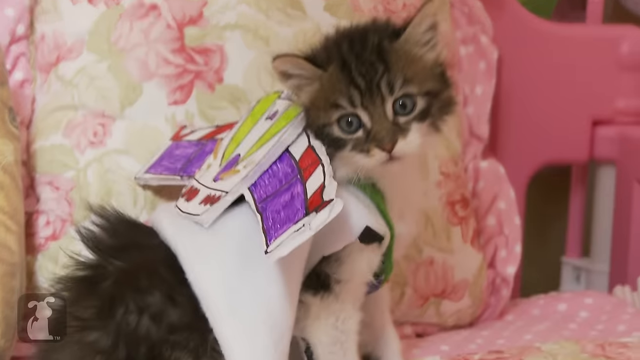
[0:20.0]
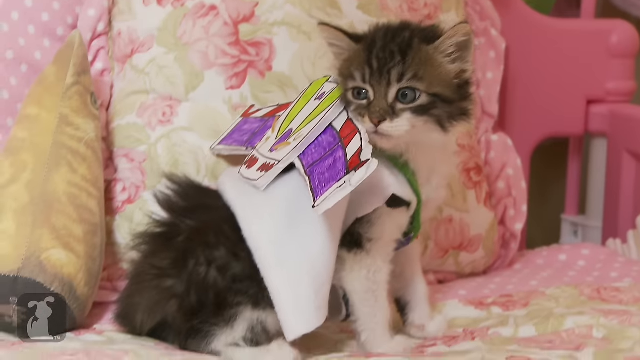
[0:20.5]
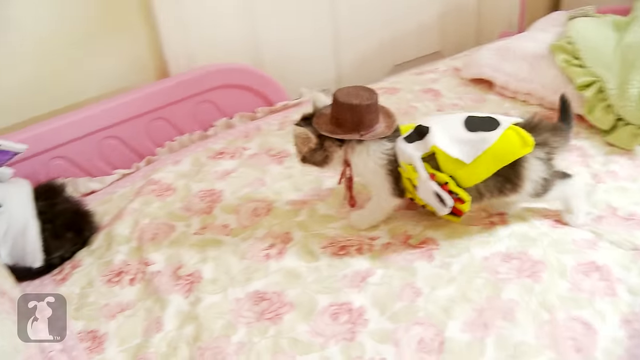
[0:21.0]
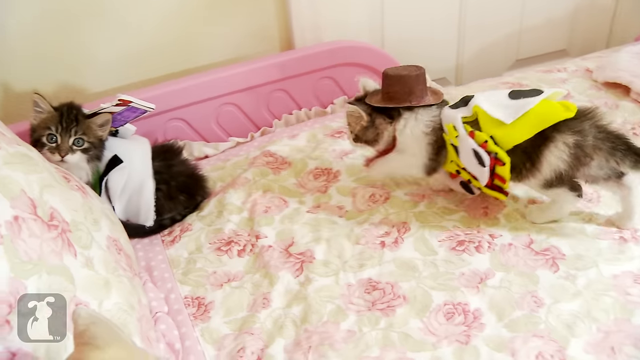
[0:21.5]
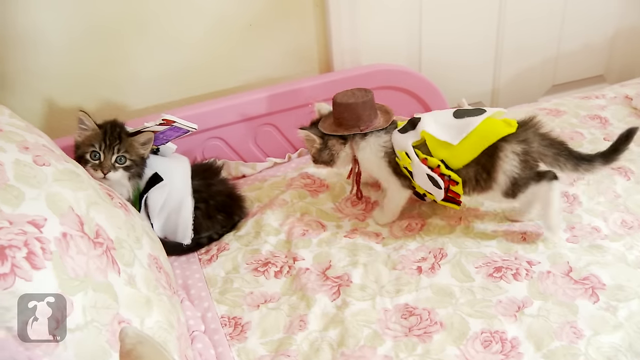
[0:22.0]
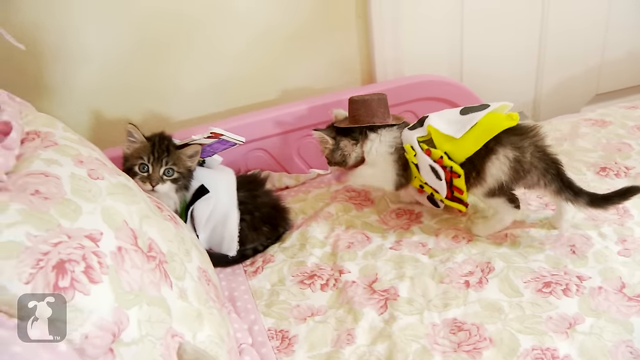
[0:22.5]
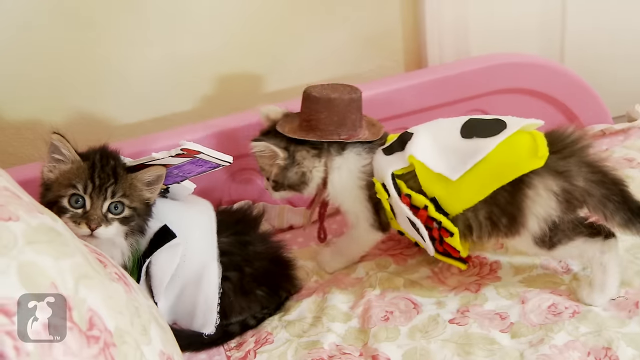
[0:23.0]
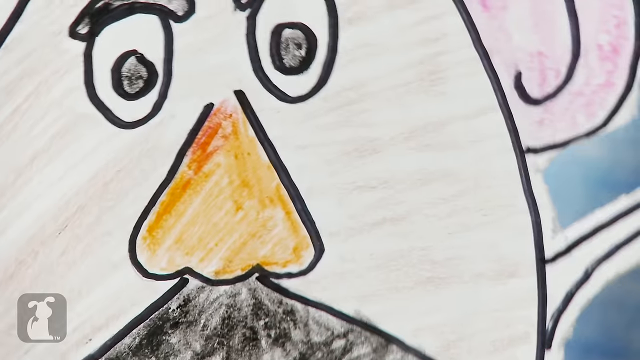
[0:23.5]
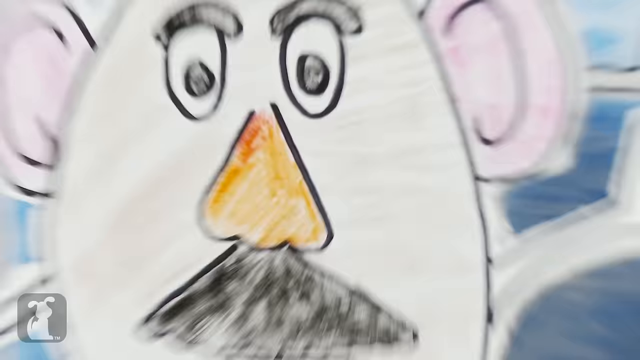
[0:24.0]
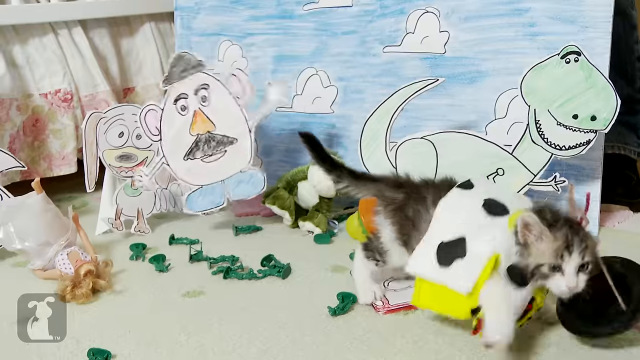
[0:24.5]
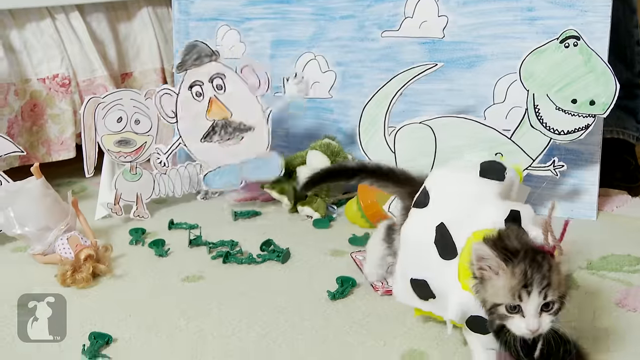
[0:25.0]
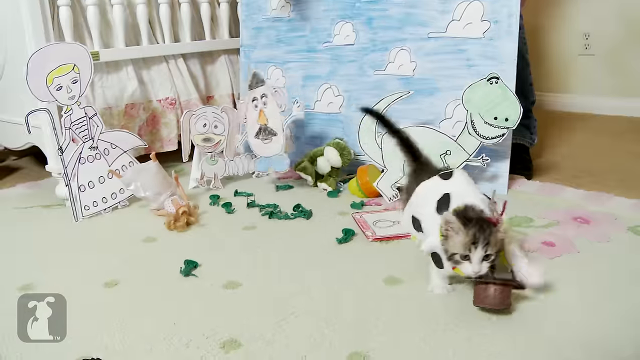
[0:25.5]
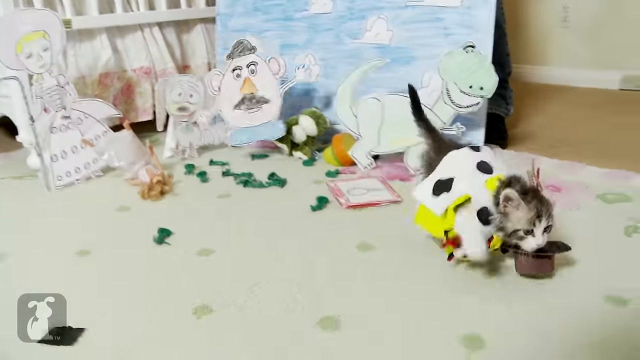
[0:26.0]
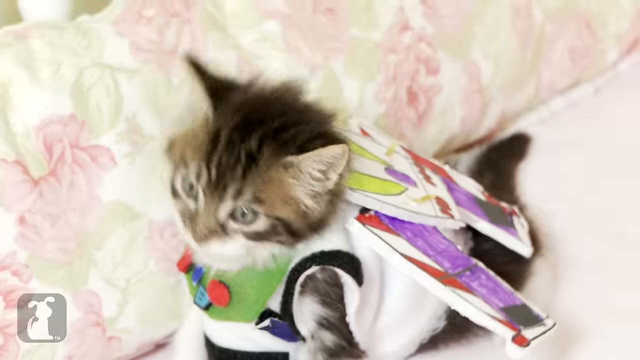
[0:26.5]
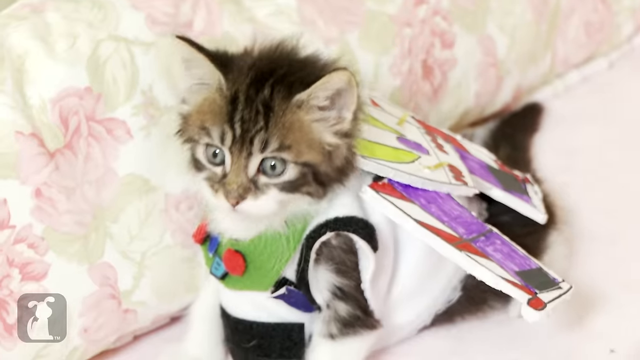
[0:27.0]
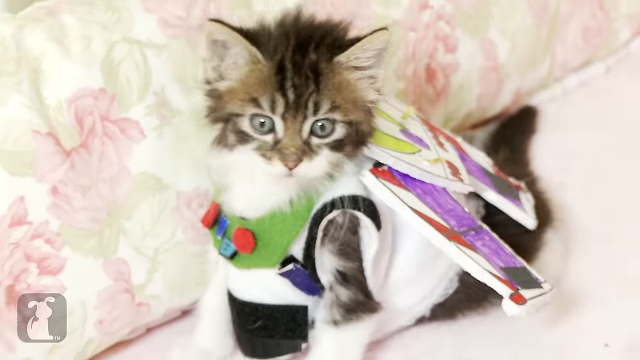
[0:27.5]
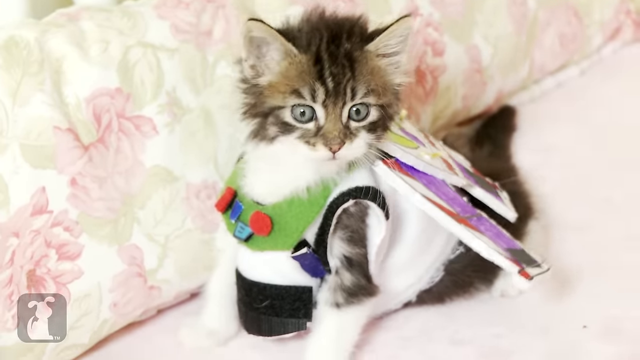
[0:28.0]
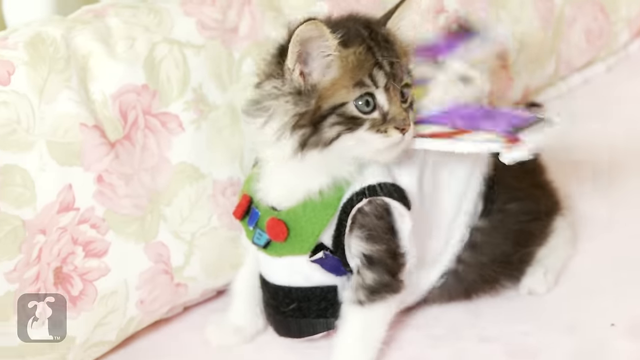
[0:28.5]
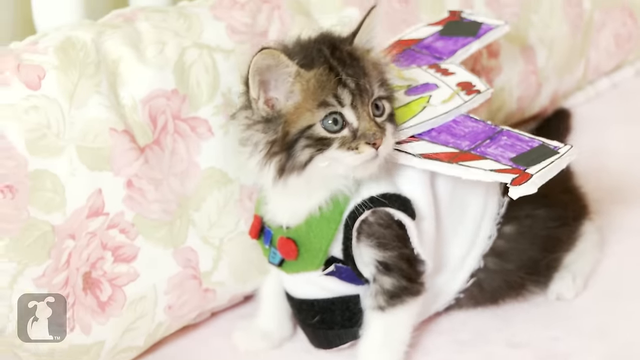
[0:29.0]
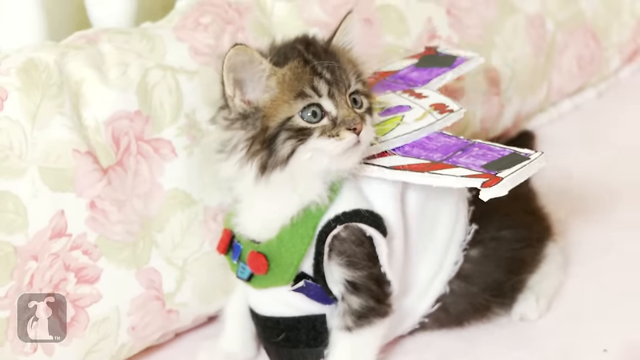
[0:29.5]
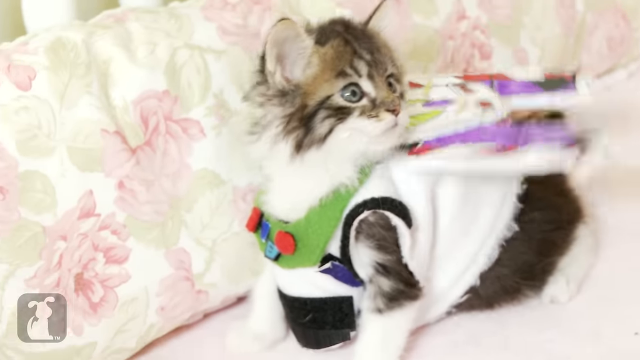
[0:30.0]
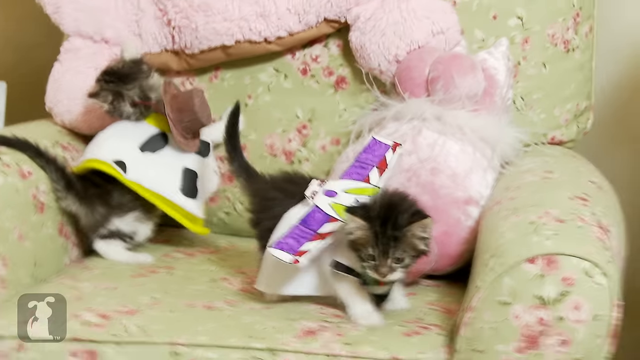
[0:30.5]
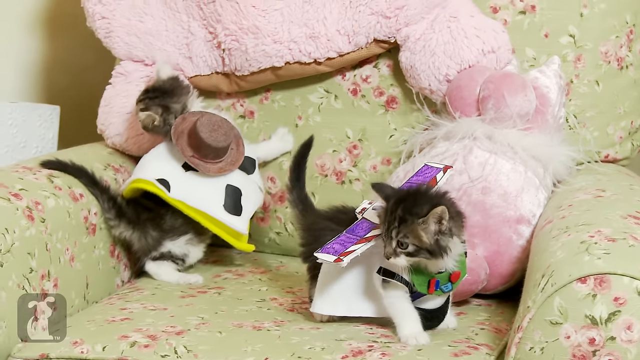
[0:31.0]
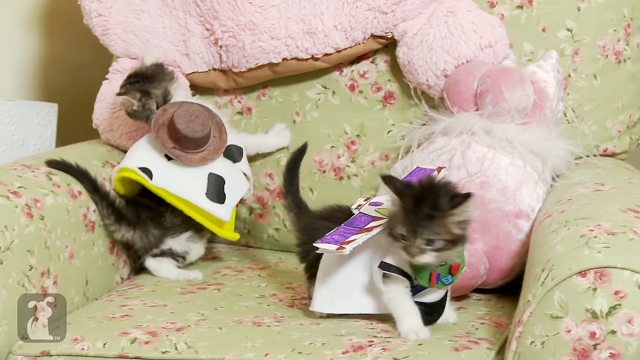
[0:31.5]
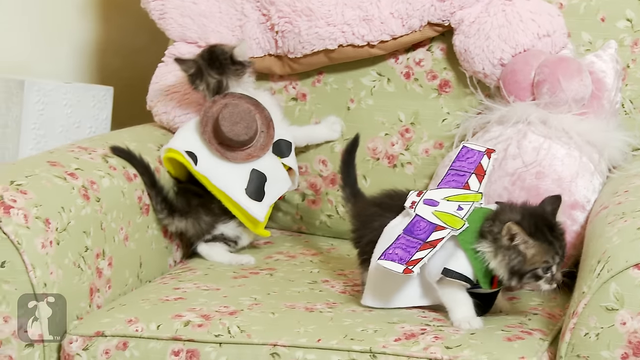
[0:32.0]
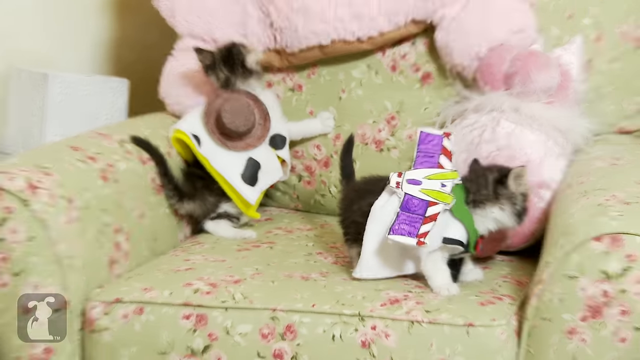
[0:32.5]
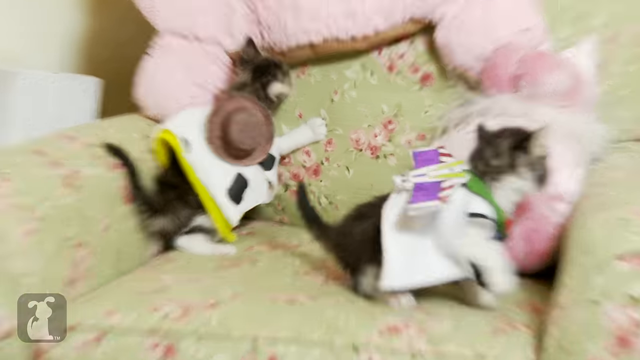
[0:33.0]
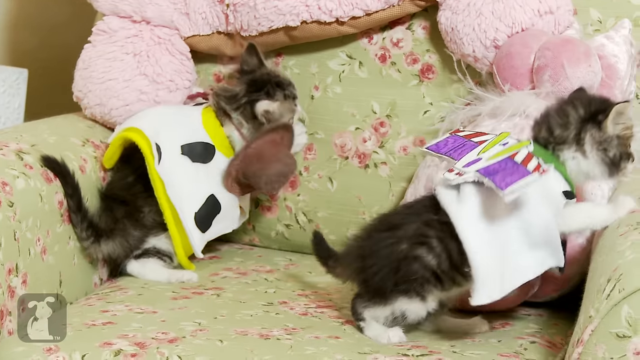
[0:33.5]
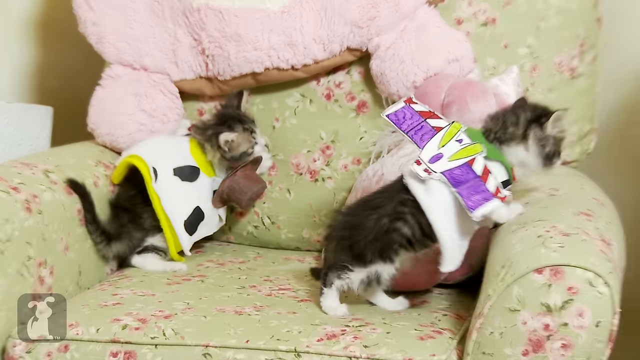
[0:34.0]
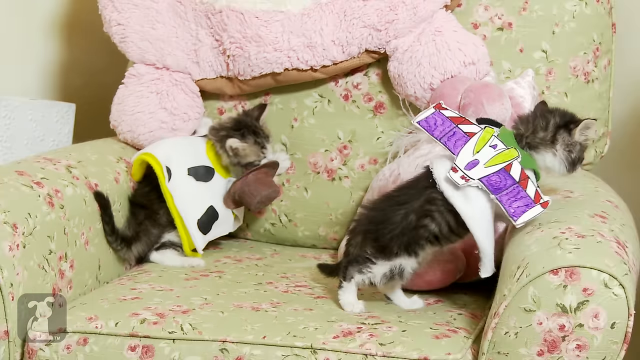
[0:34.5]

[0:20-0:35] Two kittens wear cardboard pieces of clothing, likely meant to resemble characters from the Toy World franchise. They appear interested in each other for a moment. Both attempt to climb a chair, but it is very difficult with the pieces of clothing they have on. A large figure, also made of paper or cardboard, has the face of something like a Mr Potato Head or similar and is perhaps meant to startle the kittens, but they seem more focused on sniffing at each other and climbing the chair. At one point one kitten stalks the other in a form of kitten play.